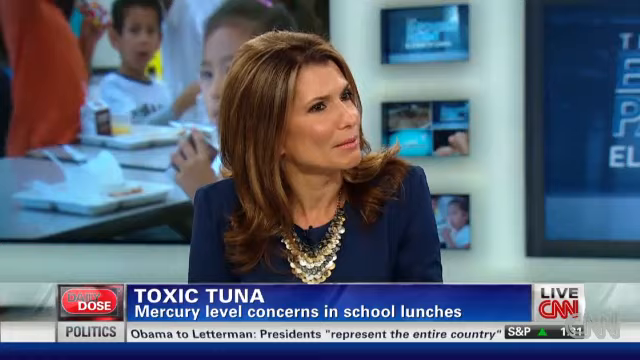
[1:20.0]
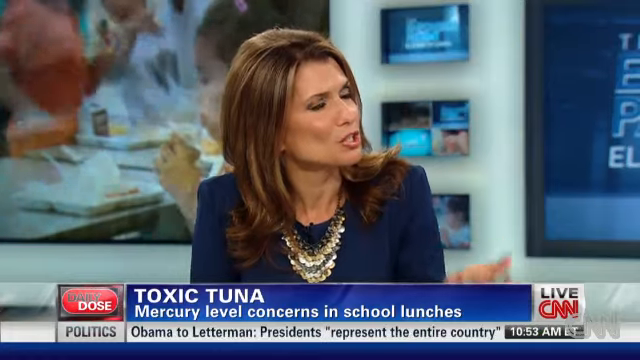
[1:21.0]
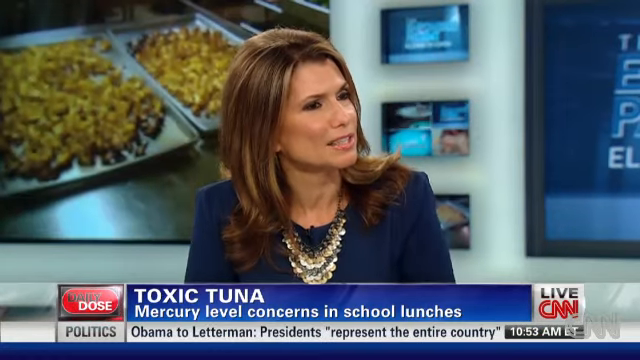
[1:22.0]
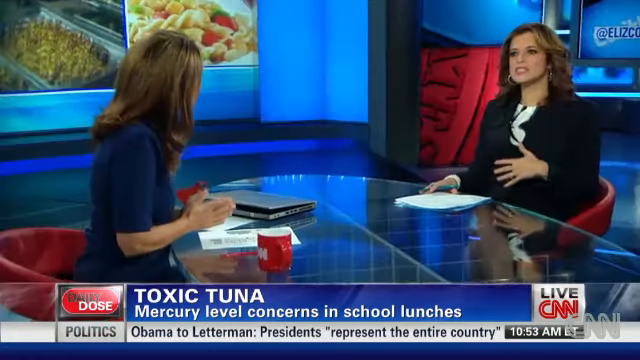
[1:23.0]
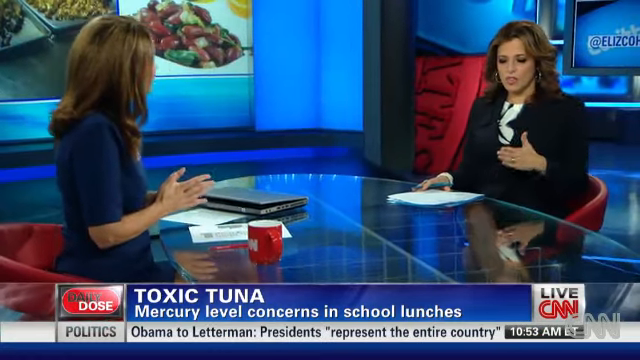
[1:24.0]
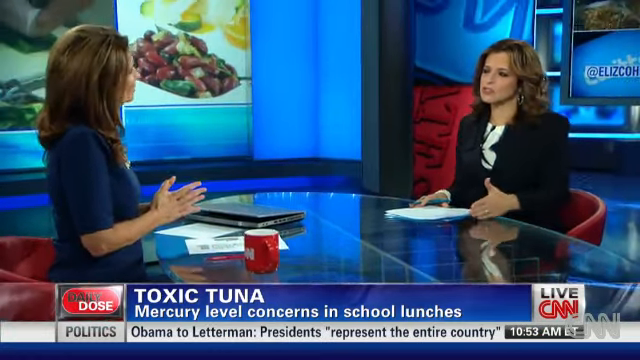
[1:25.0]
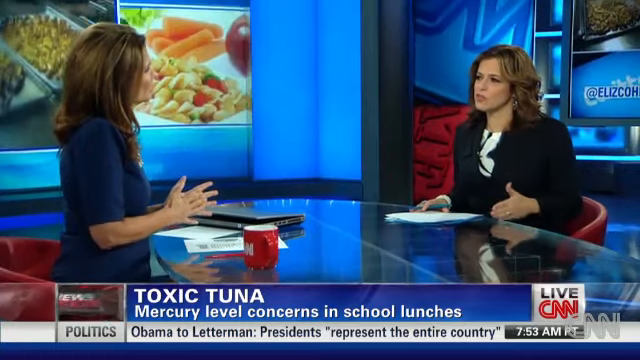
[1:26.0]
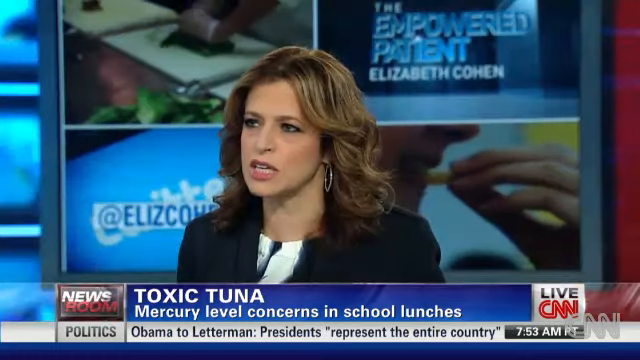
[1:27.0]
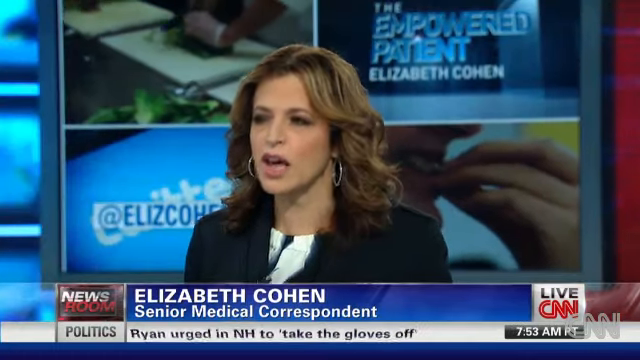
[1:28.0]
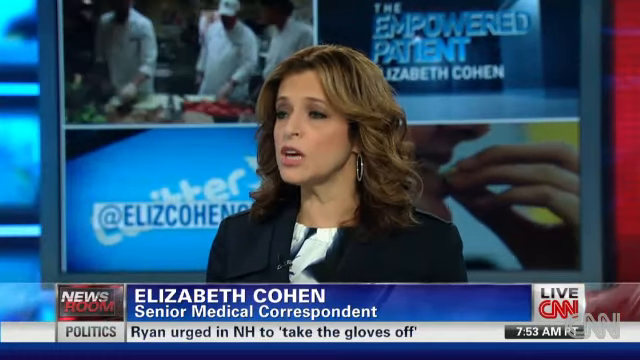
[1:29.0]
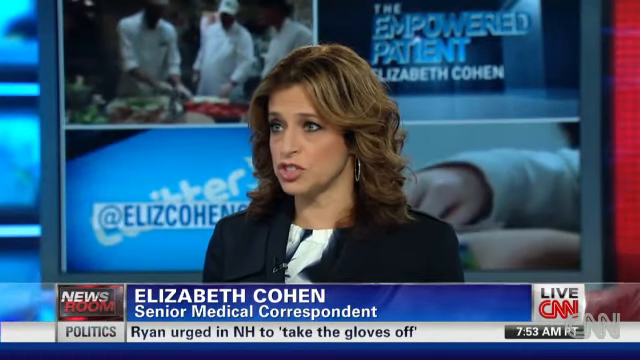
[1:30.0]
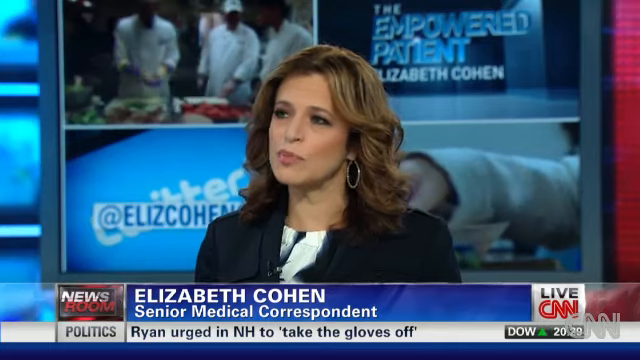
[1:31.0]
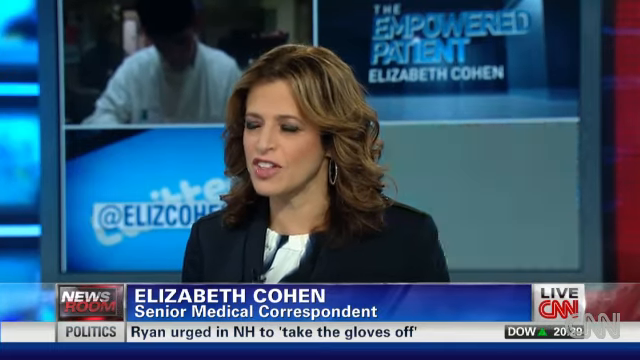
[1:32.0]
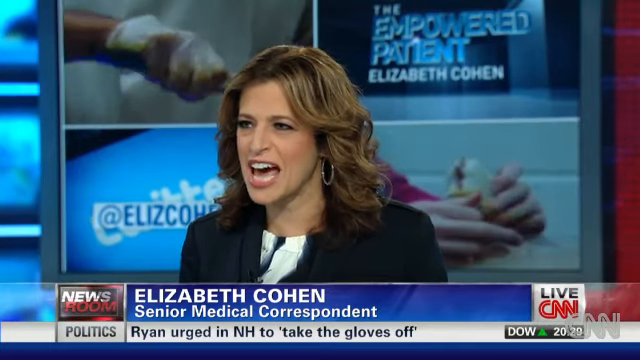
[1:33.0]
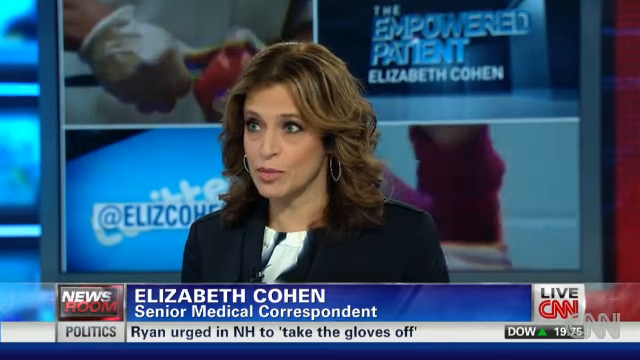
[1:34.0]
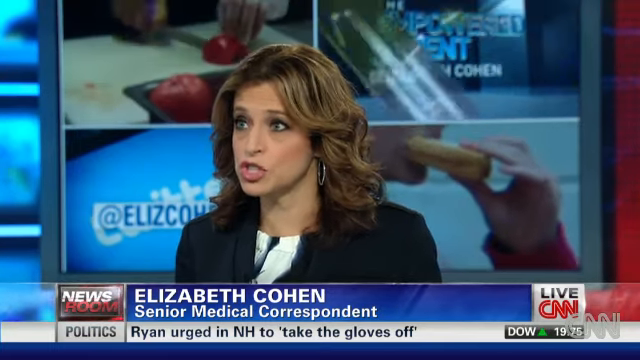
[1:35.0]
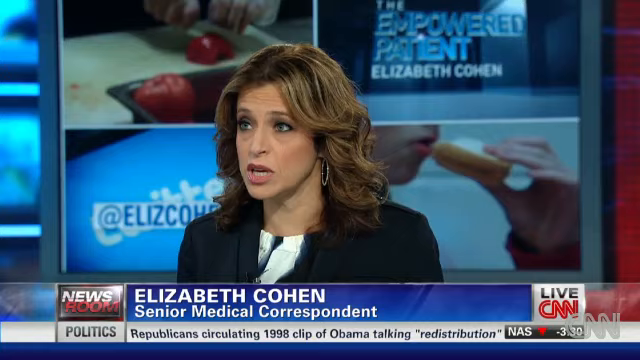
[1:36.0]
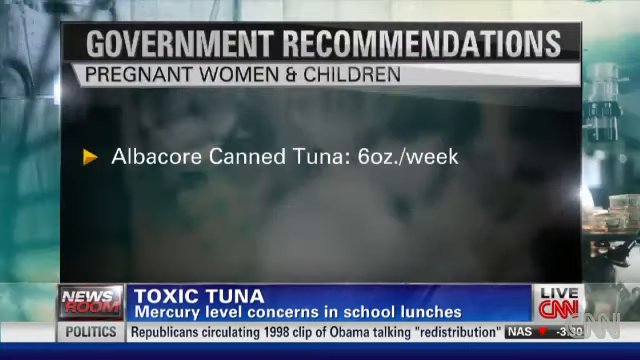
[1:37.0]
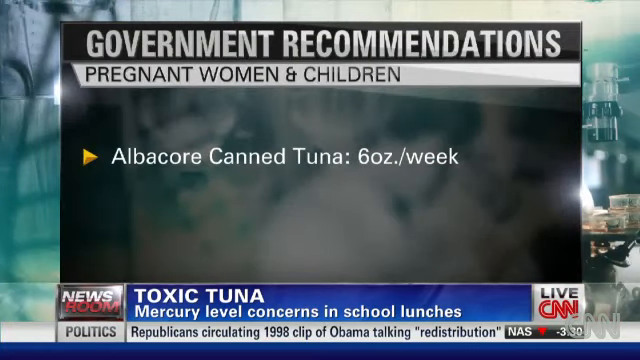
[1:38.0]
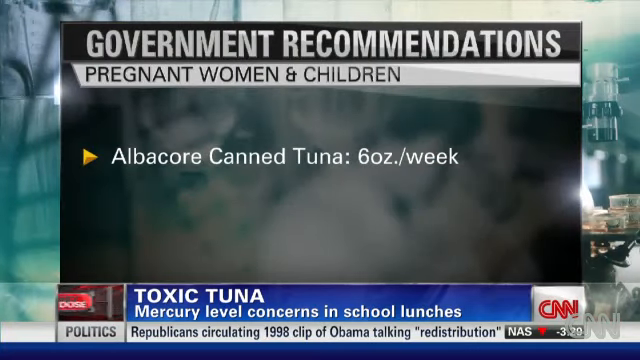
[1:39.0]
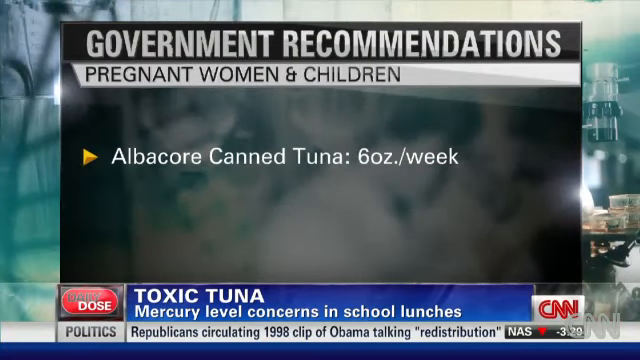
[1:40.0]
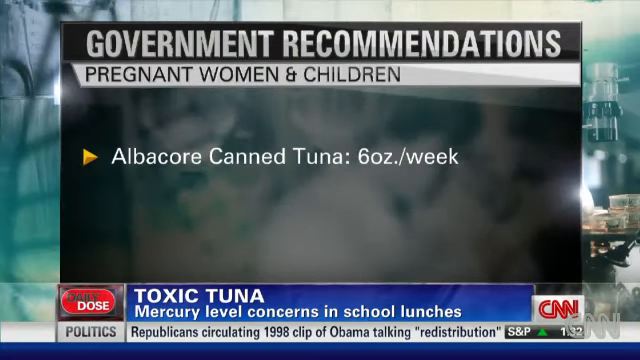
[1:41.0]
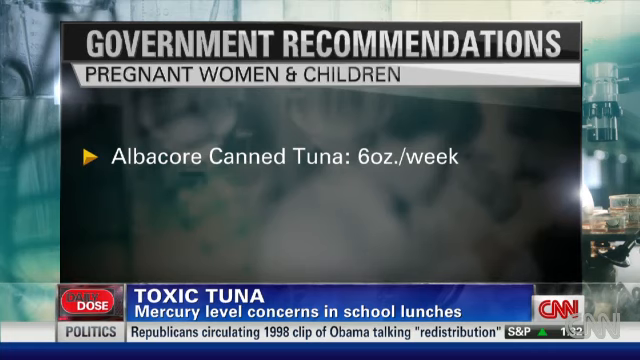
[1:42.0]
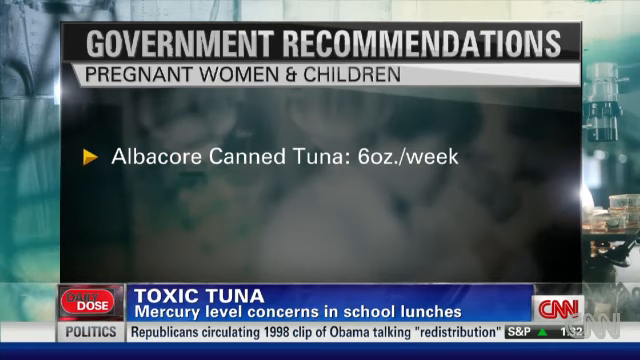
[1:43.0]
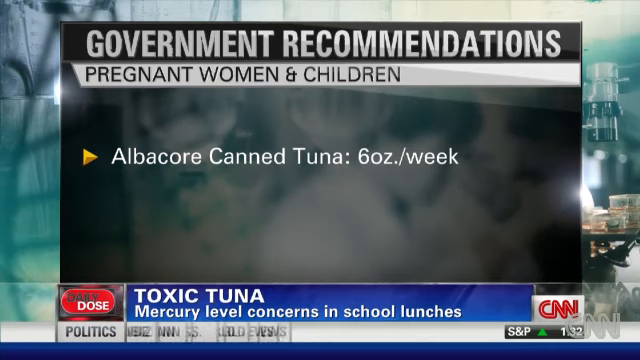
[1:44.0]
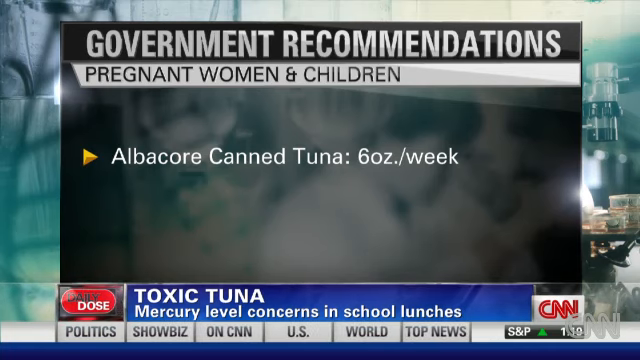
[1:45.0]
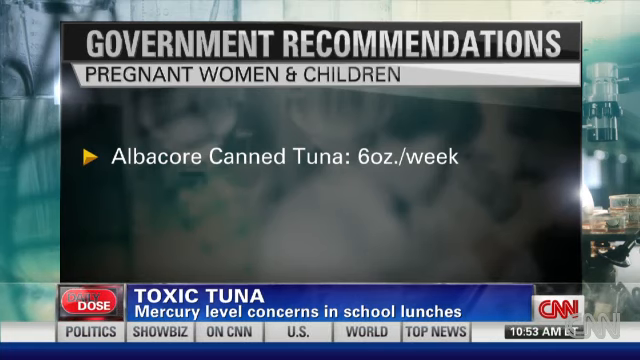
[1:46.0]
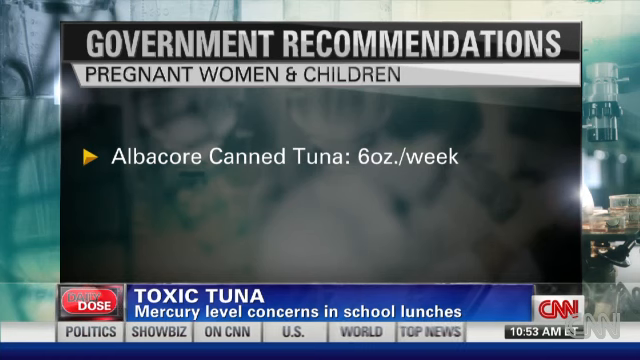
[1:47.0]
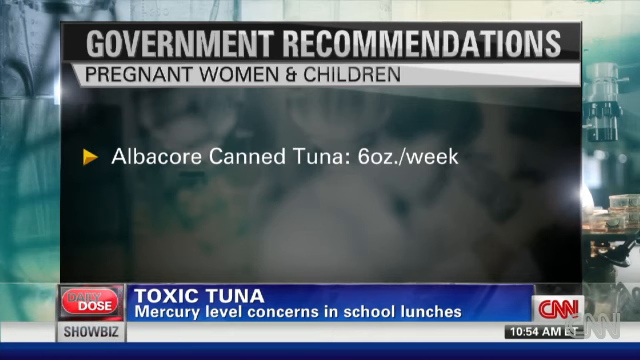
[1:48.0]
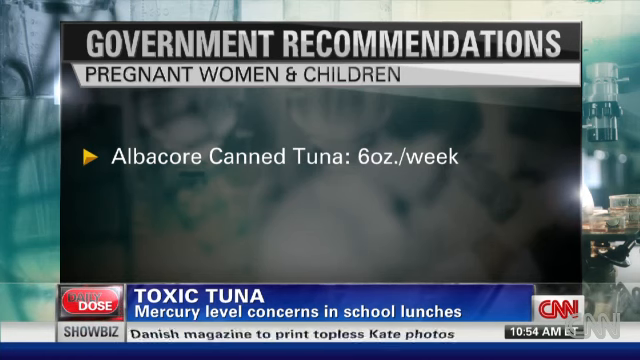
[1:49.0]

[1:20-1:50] The woman is wearing a blue jacket and a lot of jewelry; she looks like a white woman with brown hair. She appears to be showing various things: there are many clips of little kids and chefs. This is on CNN.